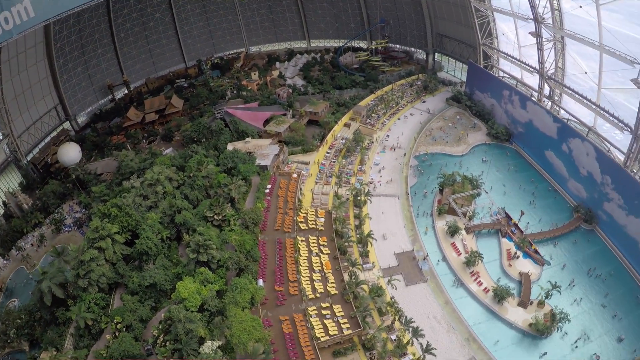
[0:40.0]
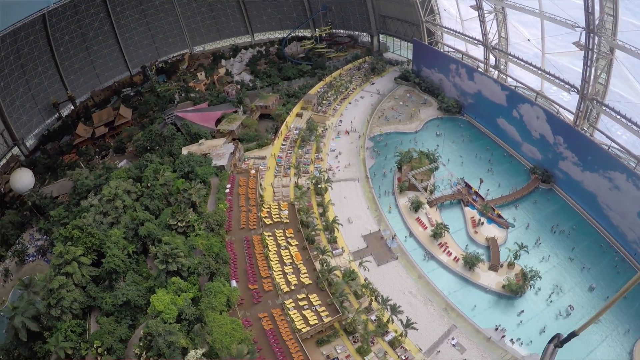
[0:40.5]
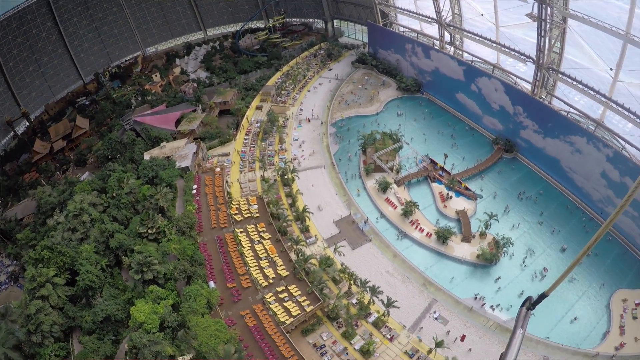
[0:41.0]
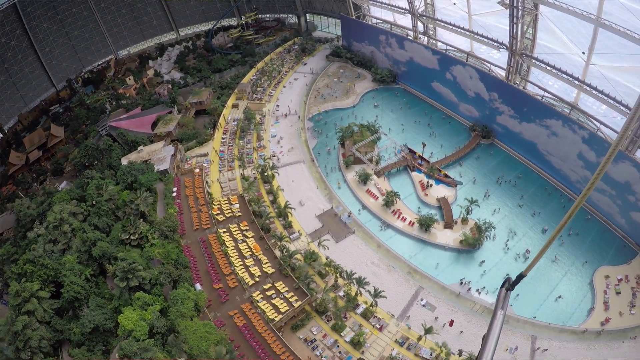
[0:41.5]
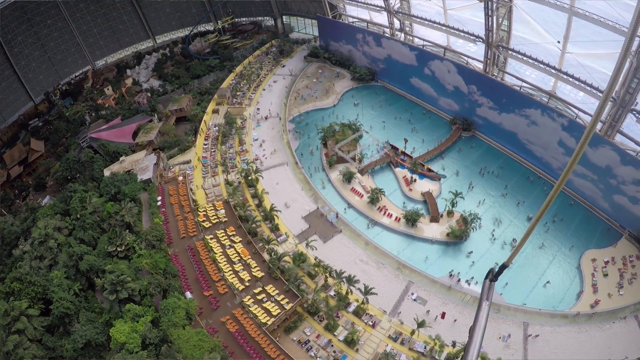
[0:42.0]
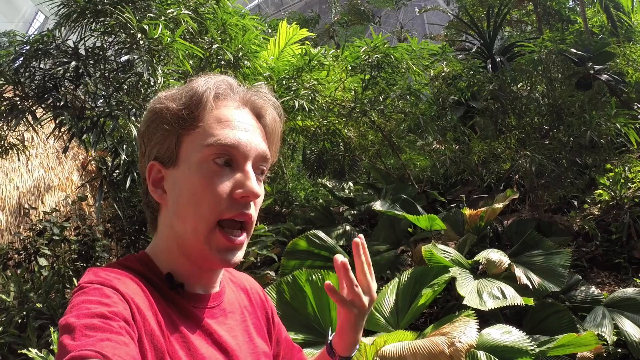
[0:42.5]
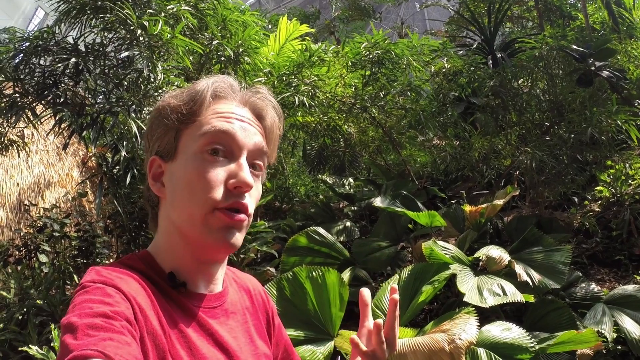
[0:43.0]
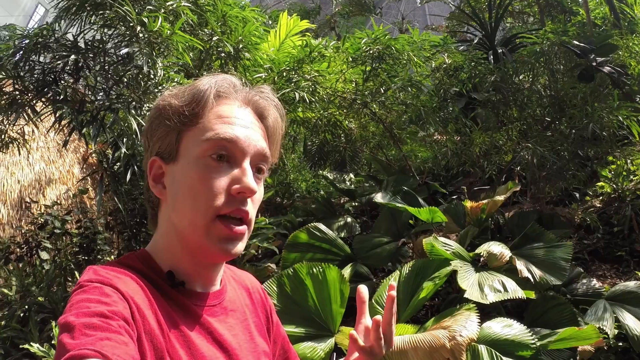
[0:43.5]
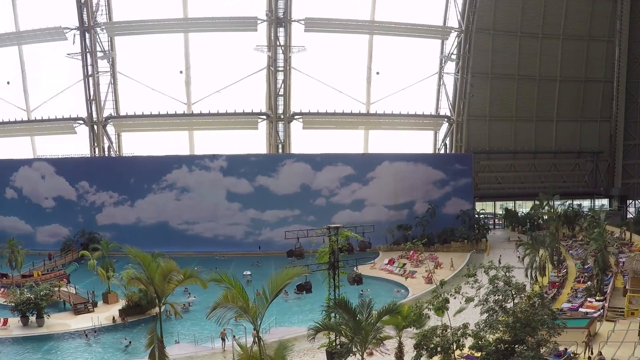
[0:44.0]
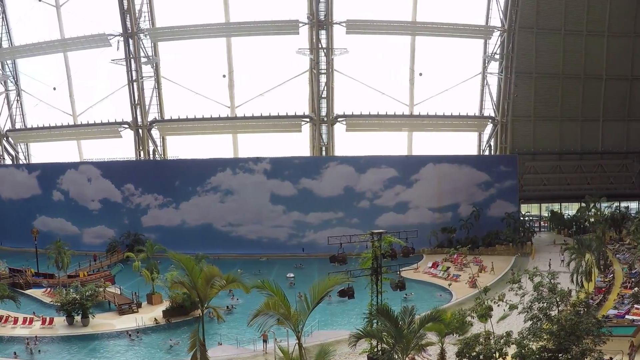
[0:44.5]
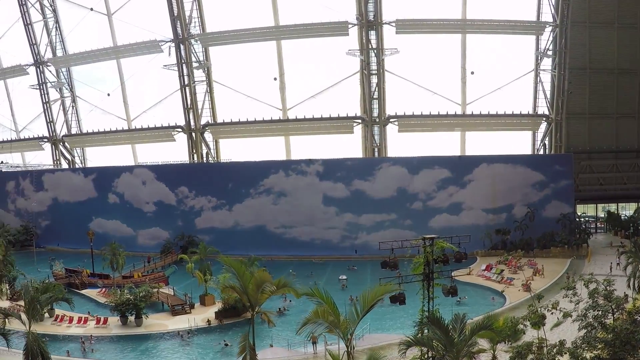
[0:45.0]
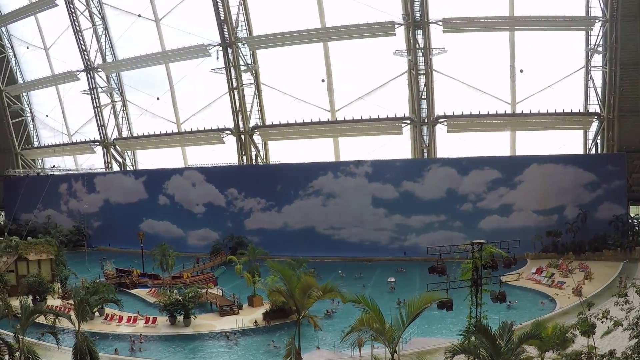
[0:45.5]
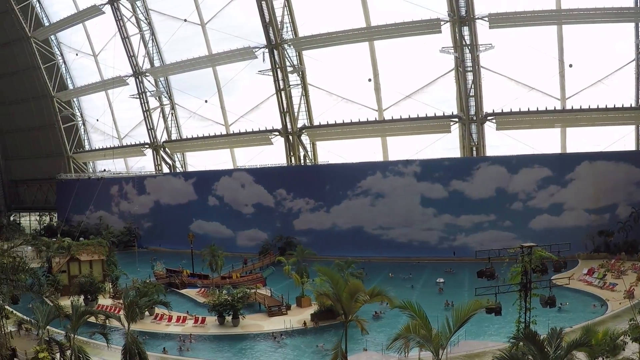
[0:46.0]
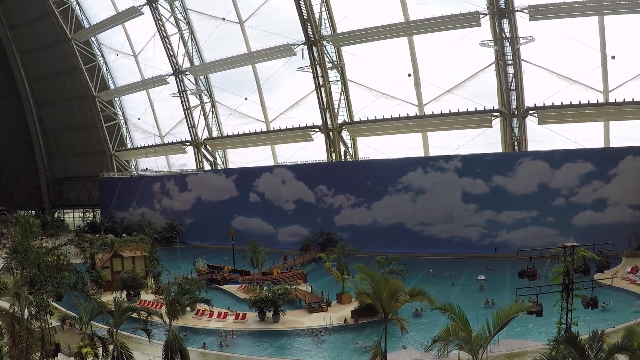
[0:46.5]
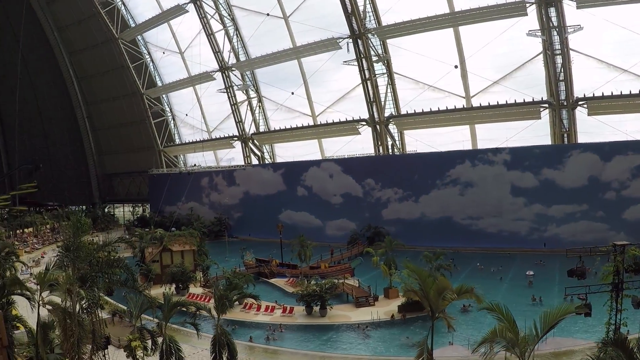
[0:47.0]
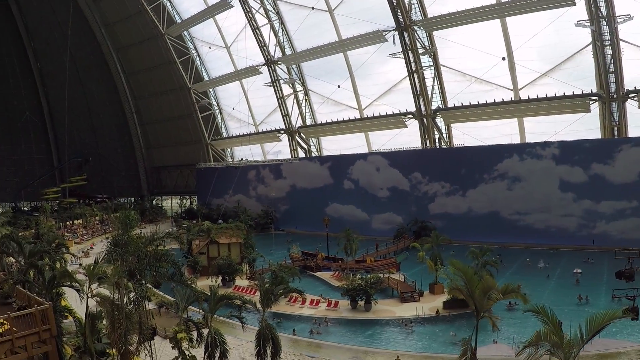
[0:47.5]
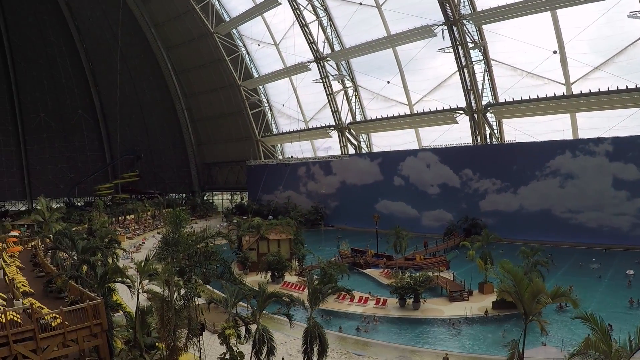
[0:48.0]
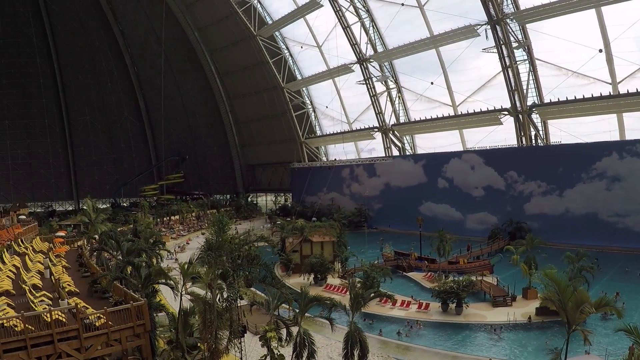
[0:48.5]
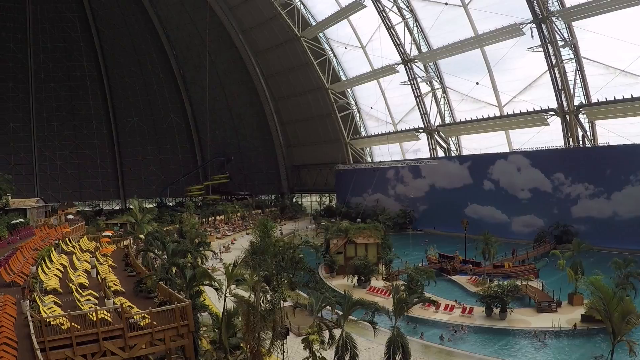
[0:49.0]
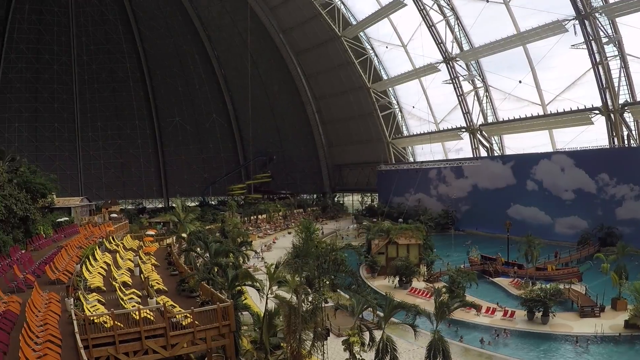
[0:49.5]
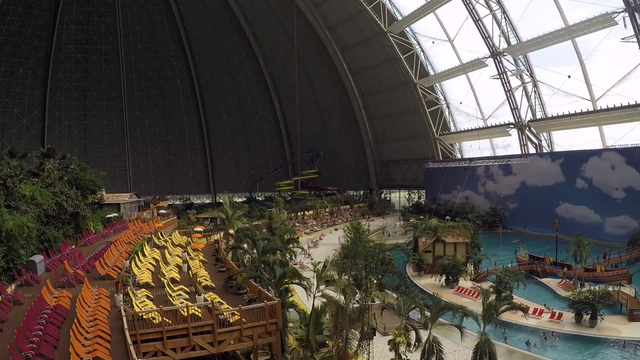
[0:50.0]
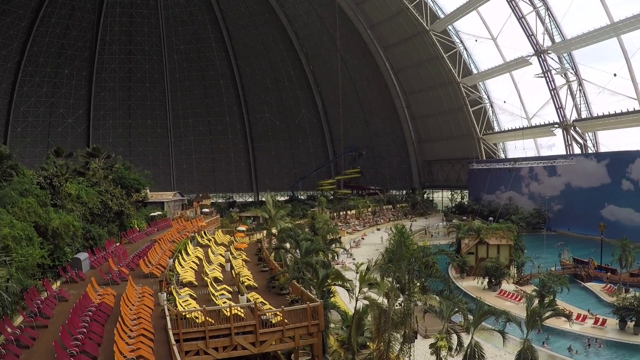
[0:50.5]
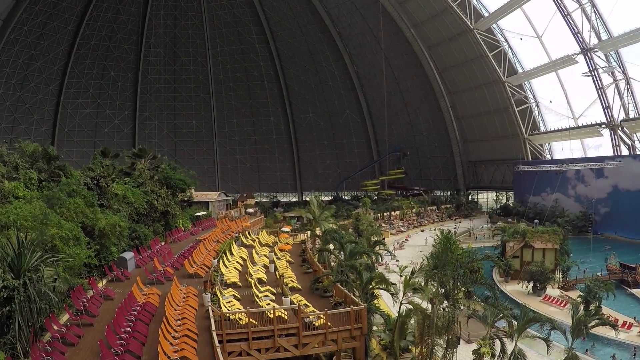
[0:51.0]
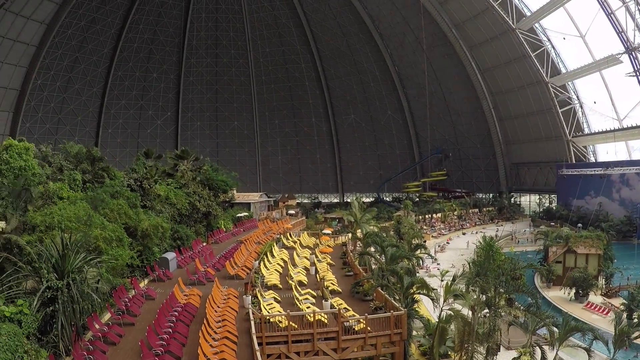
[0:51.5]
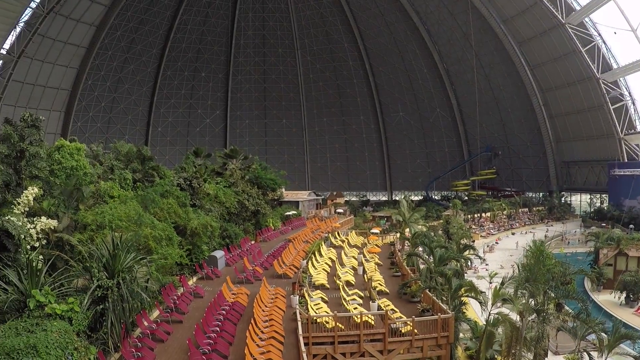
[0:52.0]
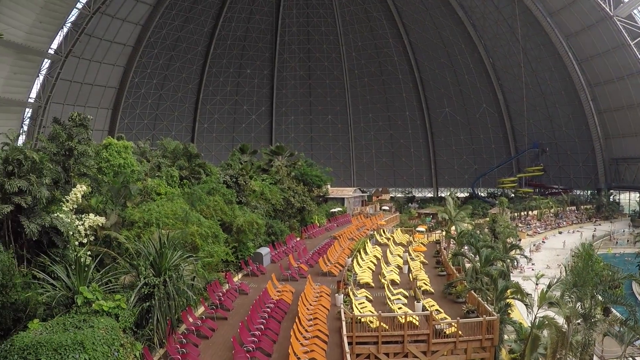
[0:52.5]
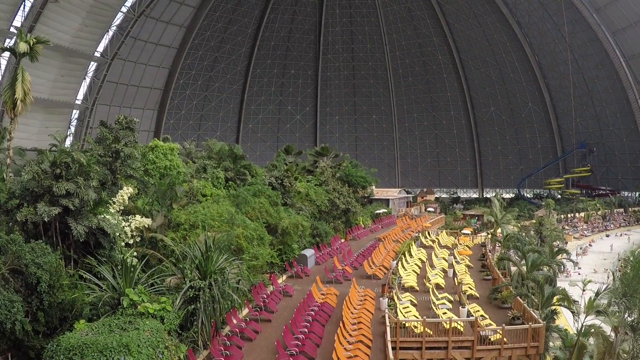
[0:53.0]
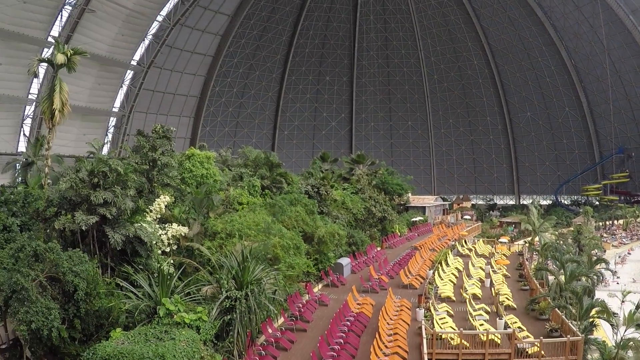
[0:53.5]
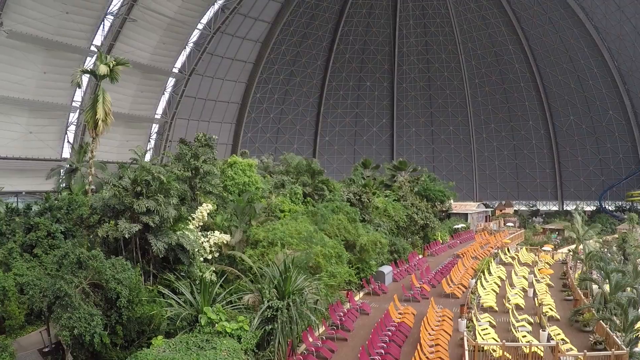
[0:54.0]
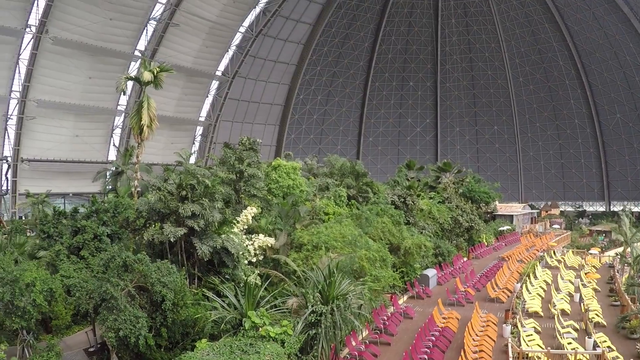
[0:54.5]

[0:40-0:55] From the top of the dome, a large pool with islands in the center is visible, with a walkway on the side coming from the back wall. The wall has a painting of sky and clouds, with large windows above. A beach area with a lot of white sand is on the left of the water, with palm trees behind the sand, and a lot of yellow and orange objects, apparently chairs, are laid out behind. The tops of many lush green trees and the rooftops of buildings are in the area behind the pool. Also on the left side of the pool is another sandy beach with what looks like chairs. The man with light brown hair in a red t-shirt talks to the camera again. The view returns to the beach, closer in, showing the large blue back wall with white clouds and windows above, the sand, many trees and palm trees. The camera pans around to show more trees and many chairs: yellow, orange and pink.